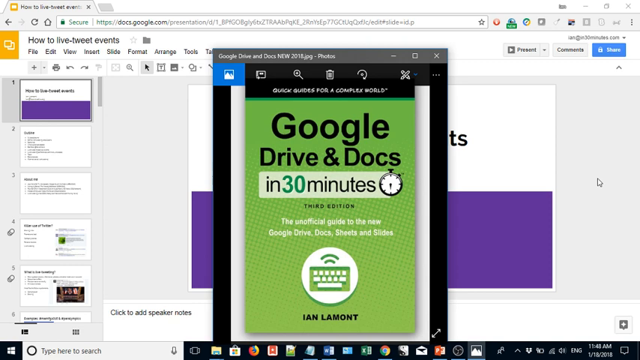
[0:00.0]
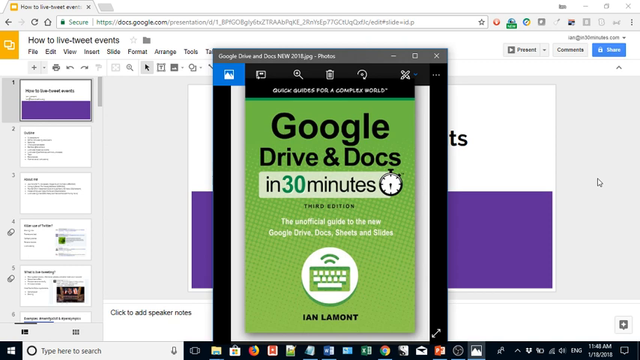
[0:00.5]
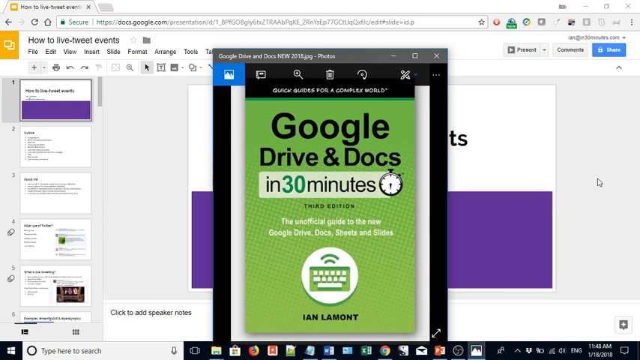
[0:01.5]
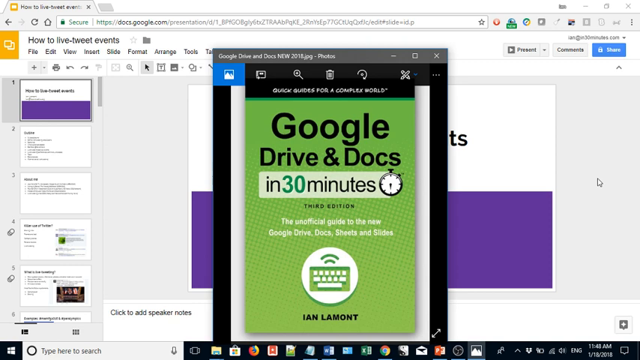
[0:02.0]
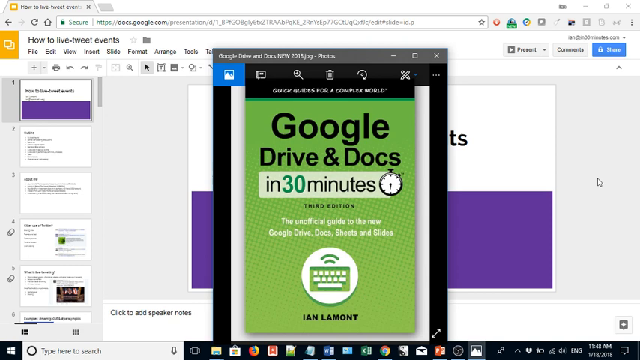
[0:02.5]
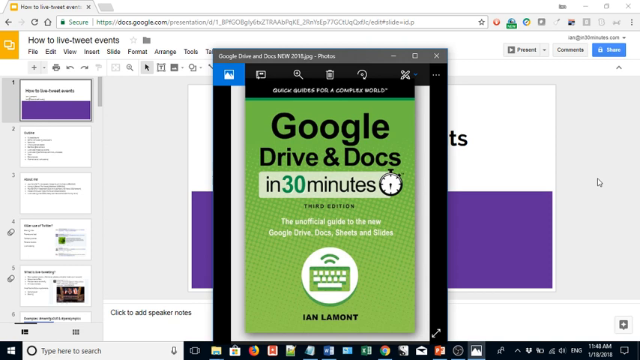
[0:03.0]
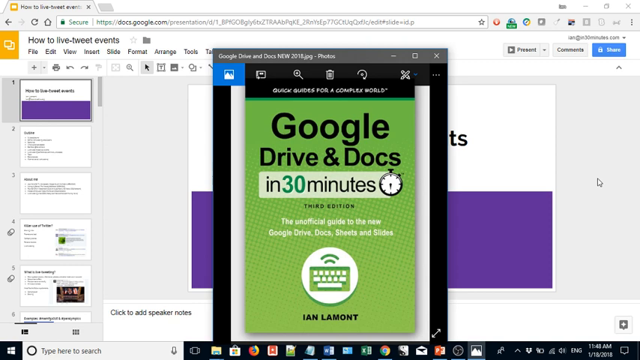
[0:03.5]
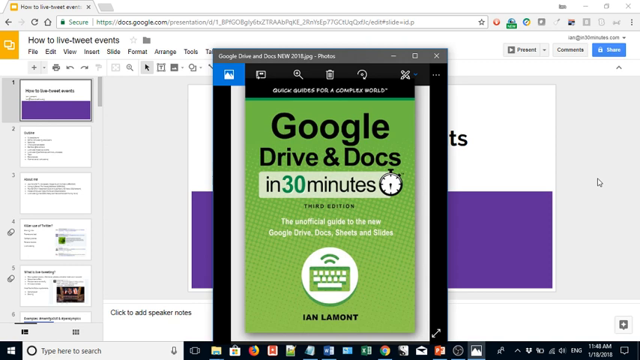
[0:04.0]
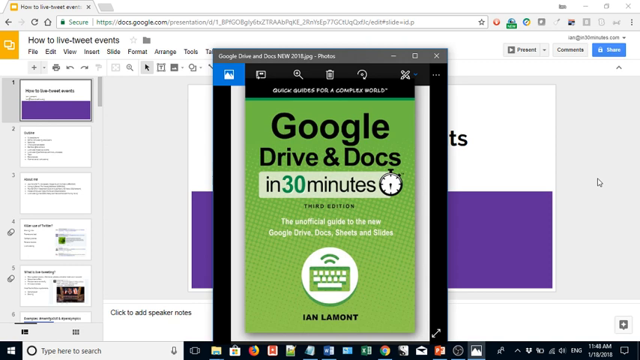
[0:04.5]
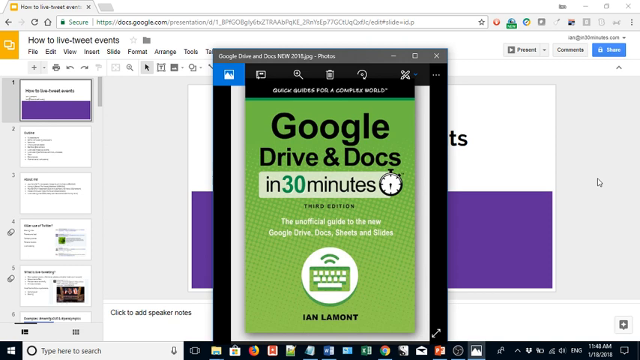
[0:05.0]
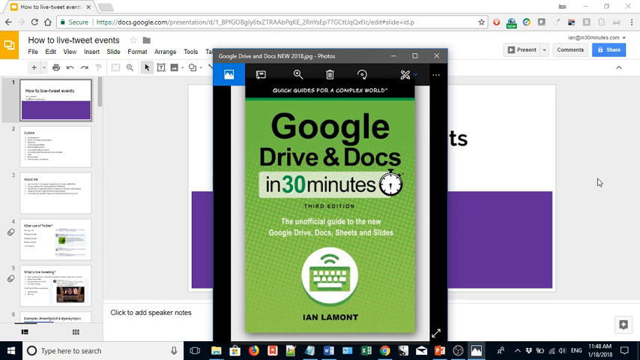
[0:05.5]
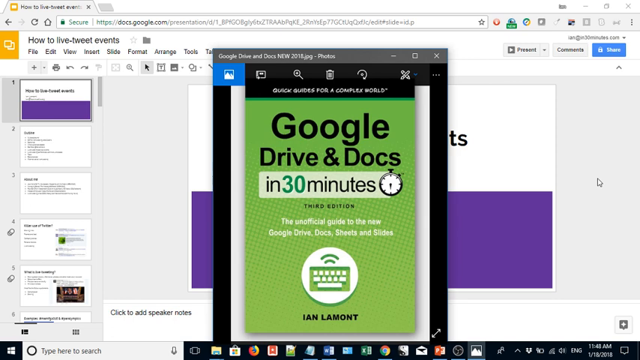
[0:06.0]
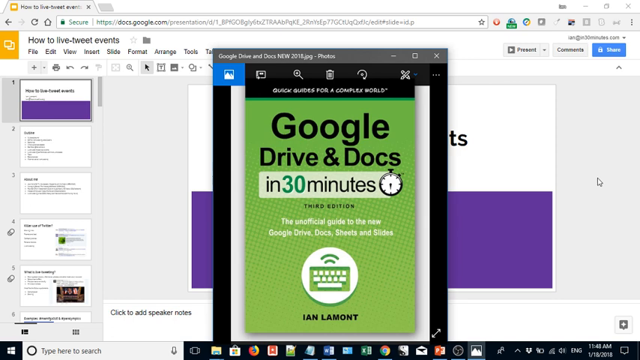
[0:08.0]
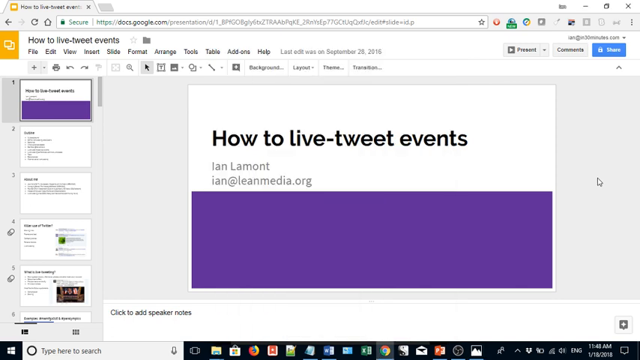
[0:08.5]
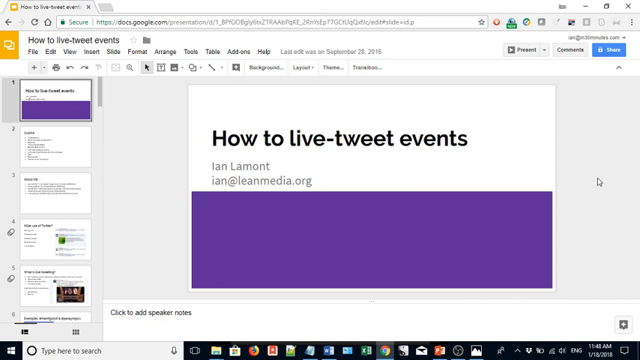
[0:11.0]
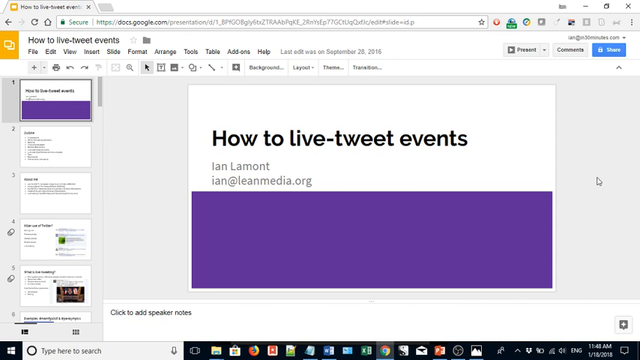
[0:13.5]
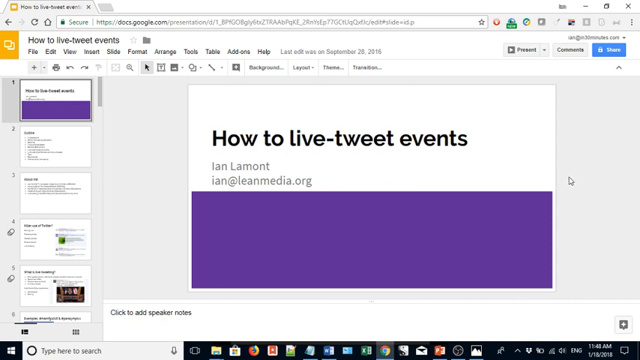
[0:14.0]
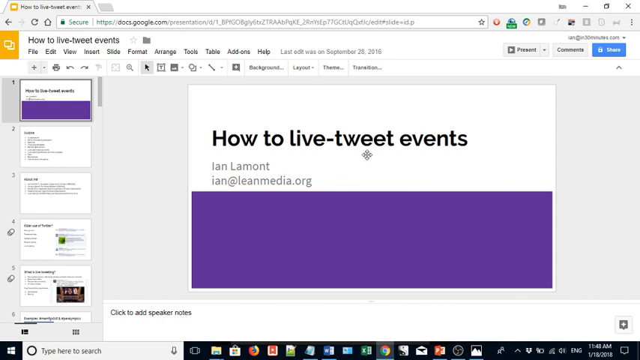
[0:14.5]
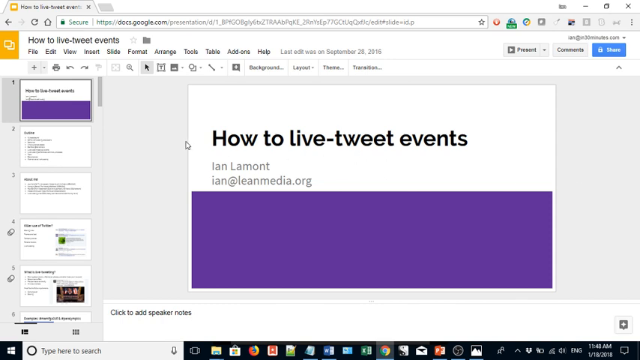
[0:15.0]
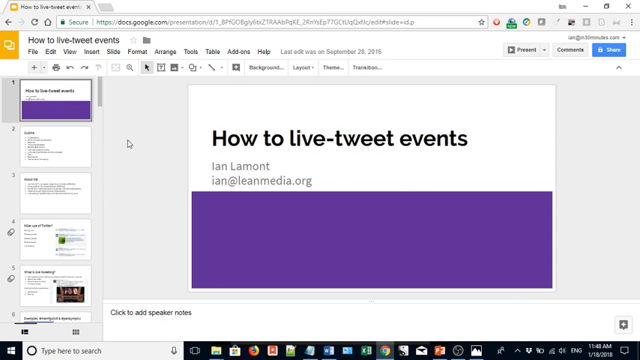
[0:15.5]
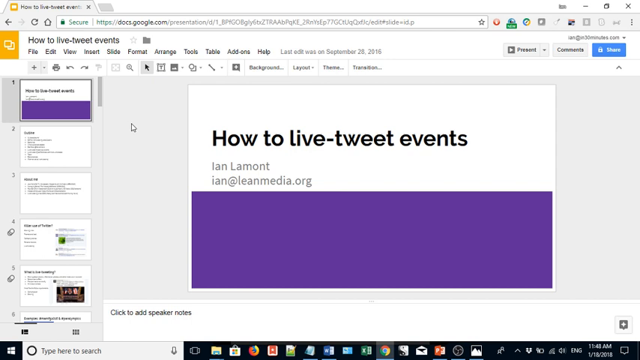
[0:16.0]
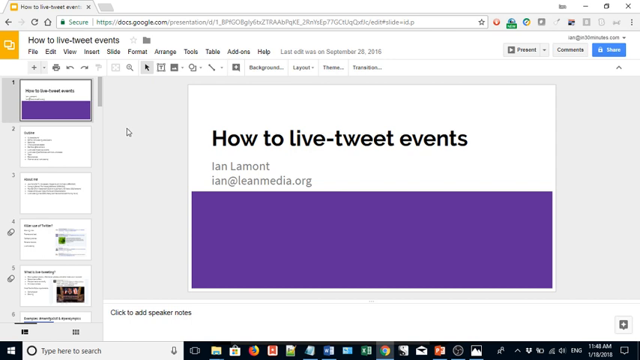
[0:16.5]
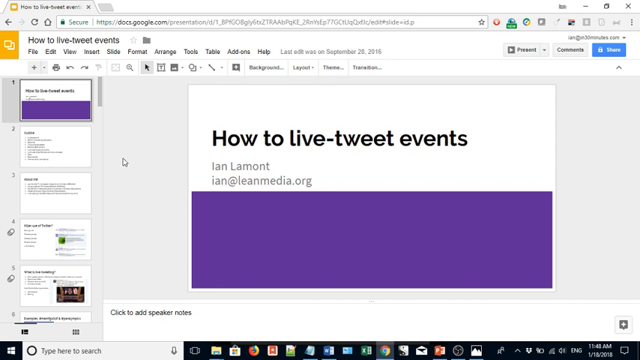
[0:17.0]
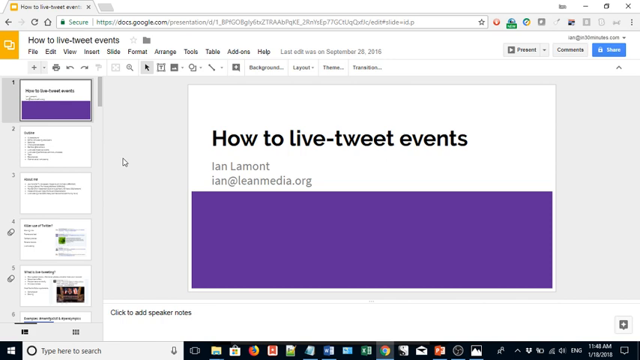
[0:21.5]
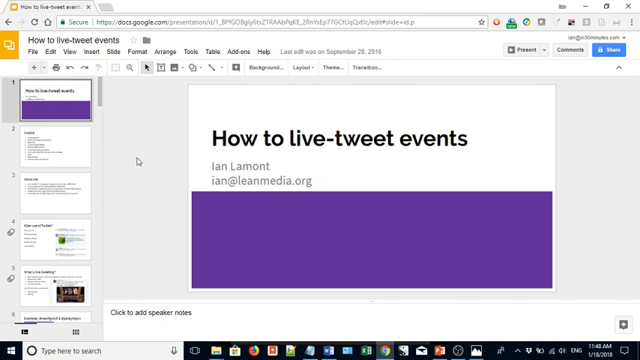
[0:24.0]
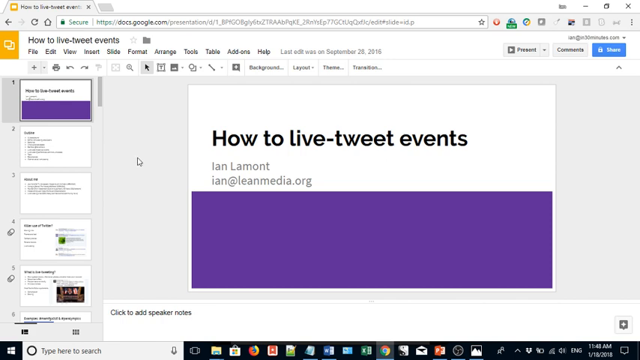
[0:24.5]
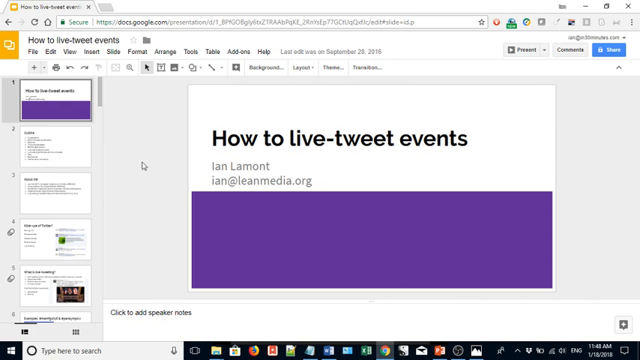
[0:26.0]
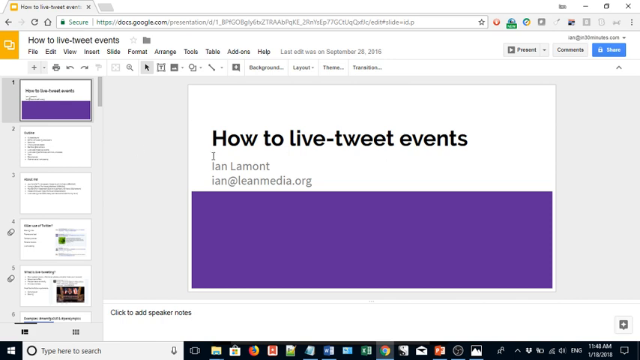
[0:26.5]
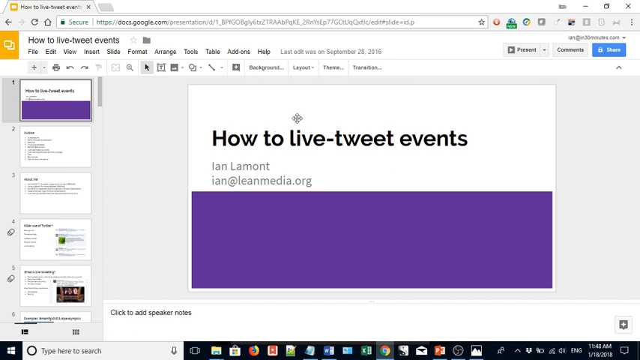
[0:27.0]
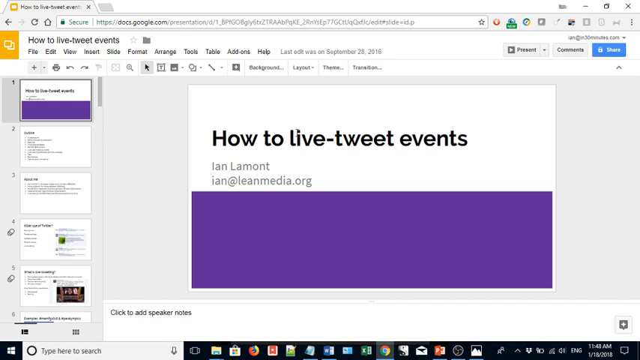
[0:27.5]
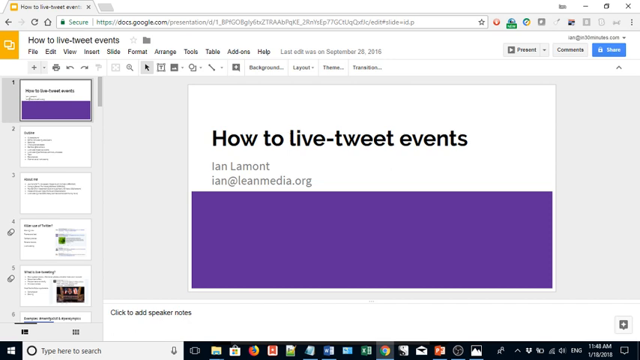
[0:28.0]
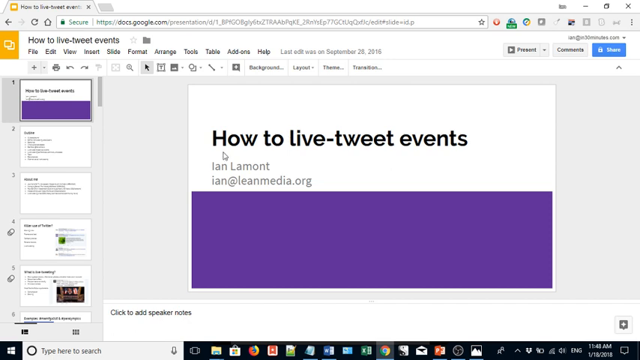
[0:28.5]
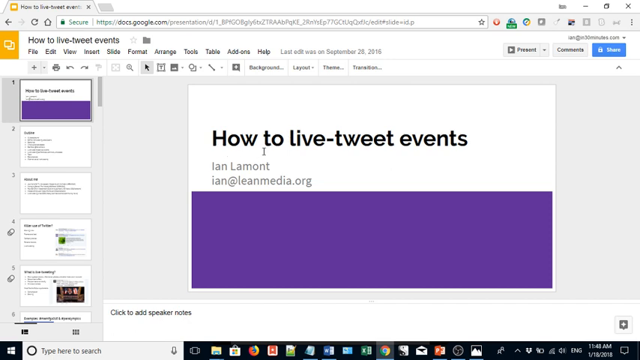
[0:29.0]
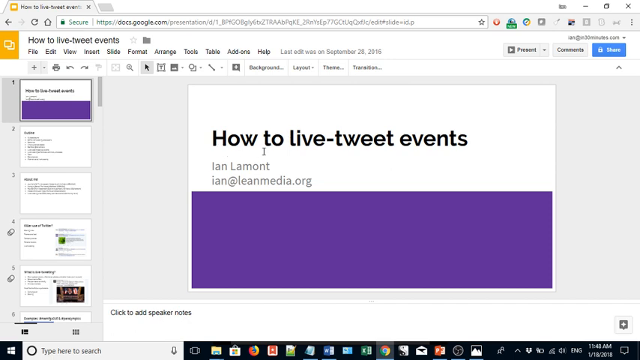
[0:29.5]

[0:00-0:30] The video opens on a JPEG photo displayed on the screen that looks like the cover of a book. It has a green background, and in black font it reads "Google Drive and Docs in 30 minutes" and "Third edition." Underneath, in smaller white font, it says "The unofficial guide to the new Google Drive Docs, sheets, and slides." Below that is a small white circle symbol that looks like it has a cutout design of a keyboard inside, with something like a Wi-Fi symbol over it, and beneath it the name "Ian Lamont" appears in black letters. The user closes this window, revealing a full-screen browser open to a presentation in Google Docs. The title at the top left-hand corner reads "How to Live-Tweet Events." A panel on the left shows smaller thumbnails of all the slides in the presentation, and the selected slide appears on the right. The first slide is showing: it has a white background with a very large purple box at the bottom that spans the whole page and takes up almost half the screen. Toward the top, in bold black letters, it says "how to live-tweet events," with "Ian Lamont" below it on the left in smaller black letters and "ian@leanmedia.org" beneath that.